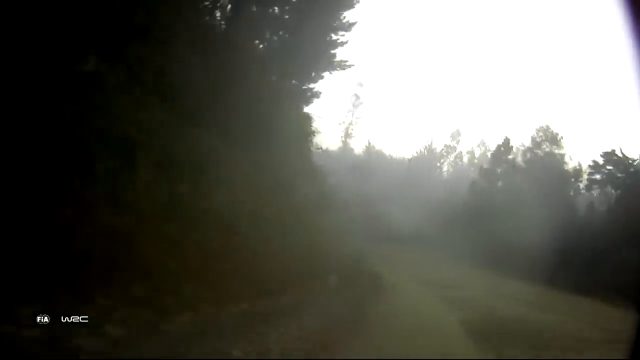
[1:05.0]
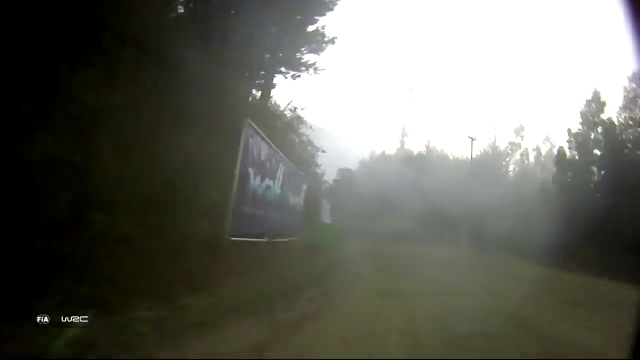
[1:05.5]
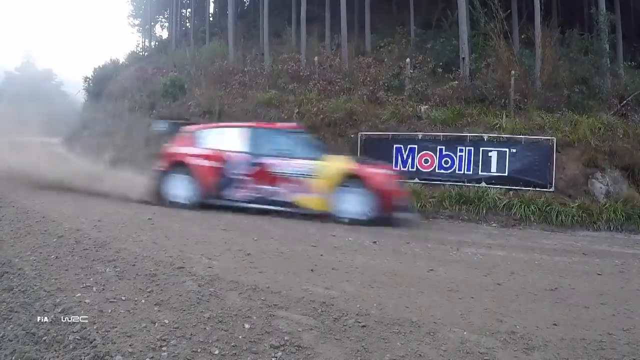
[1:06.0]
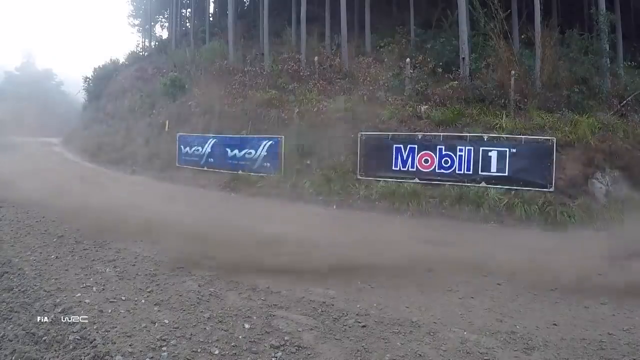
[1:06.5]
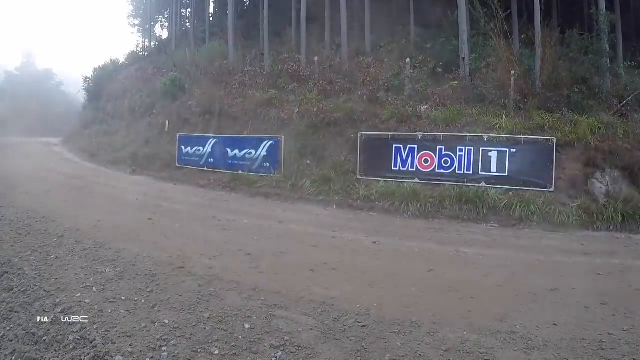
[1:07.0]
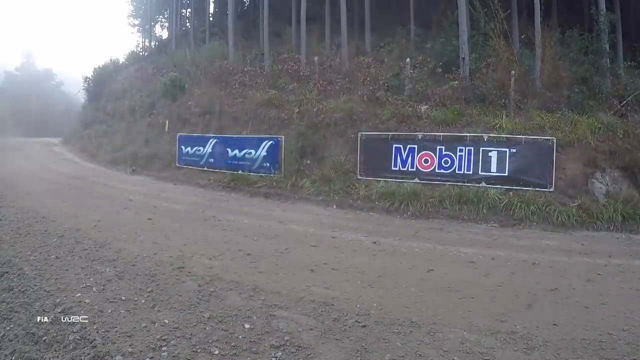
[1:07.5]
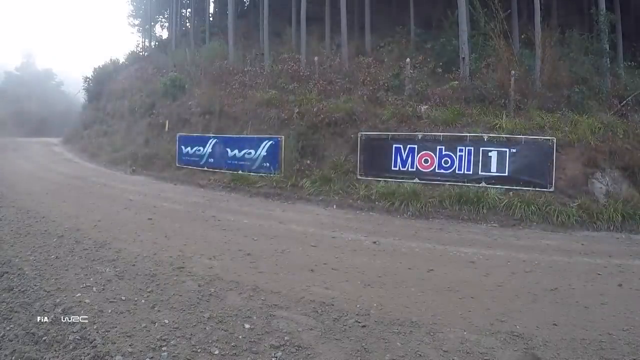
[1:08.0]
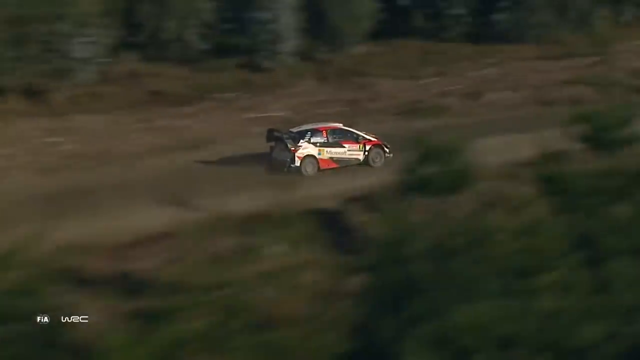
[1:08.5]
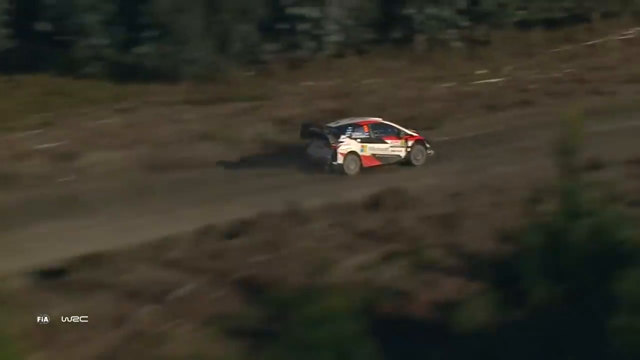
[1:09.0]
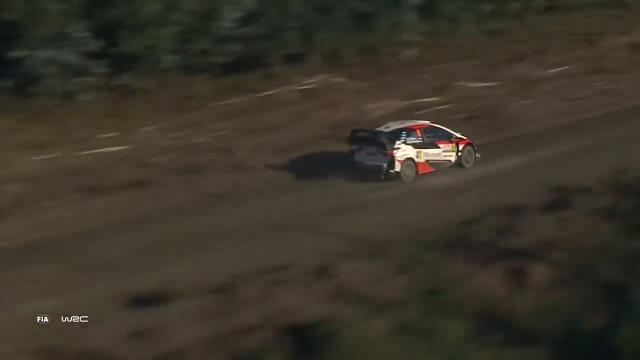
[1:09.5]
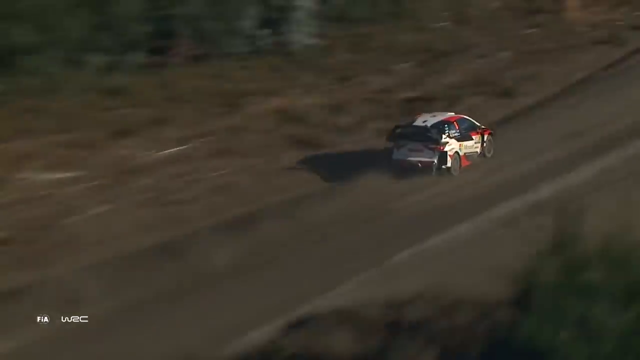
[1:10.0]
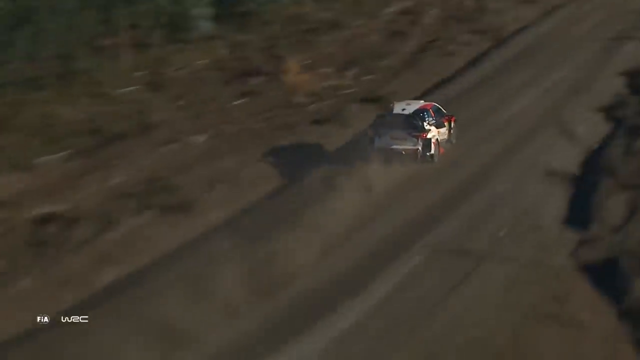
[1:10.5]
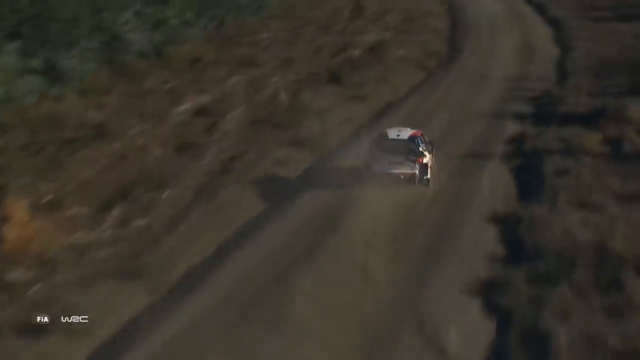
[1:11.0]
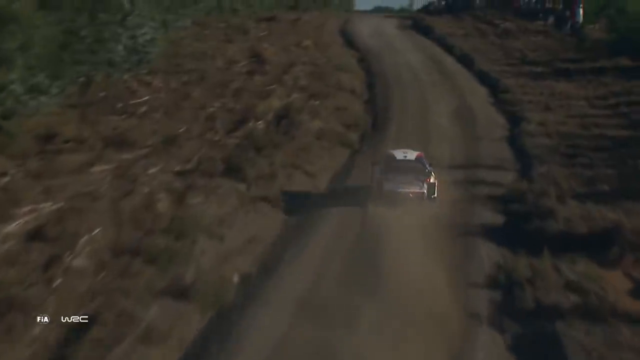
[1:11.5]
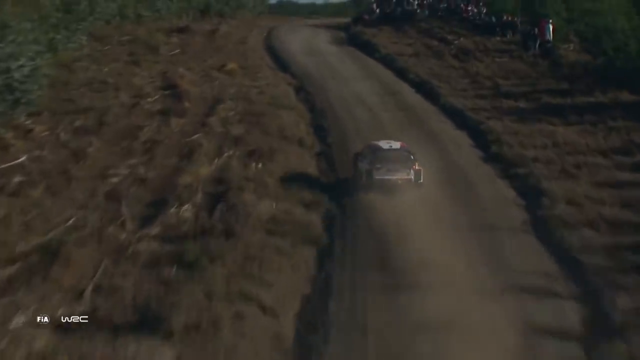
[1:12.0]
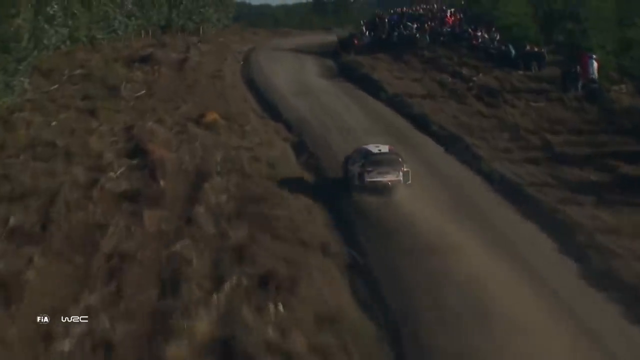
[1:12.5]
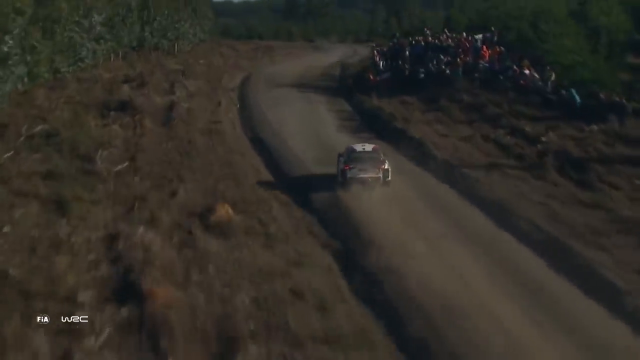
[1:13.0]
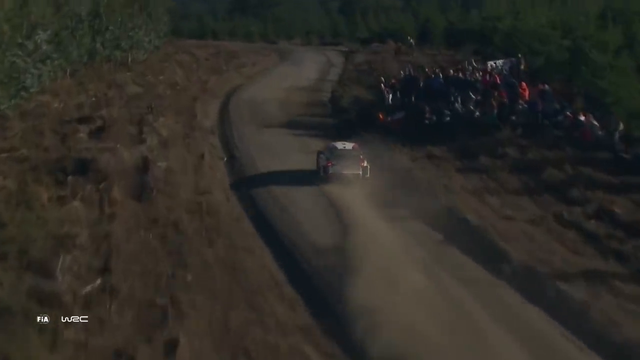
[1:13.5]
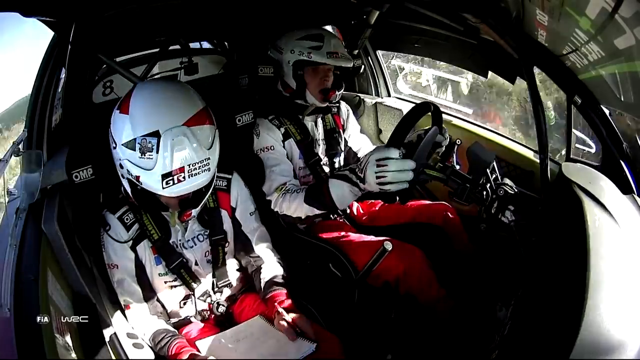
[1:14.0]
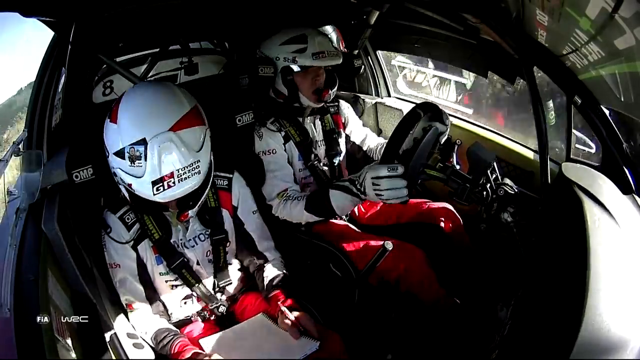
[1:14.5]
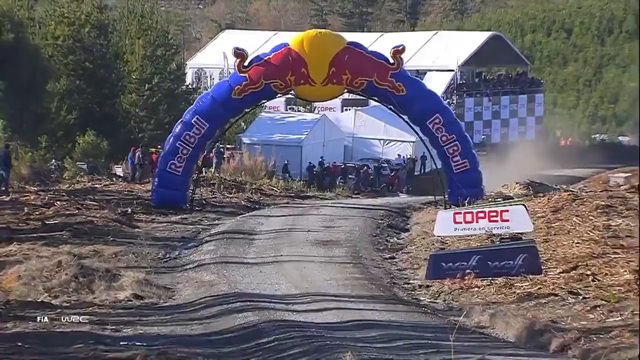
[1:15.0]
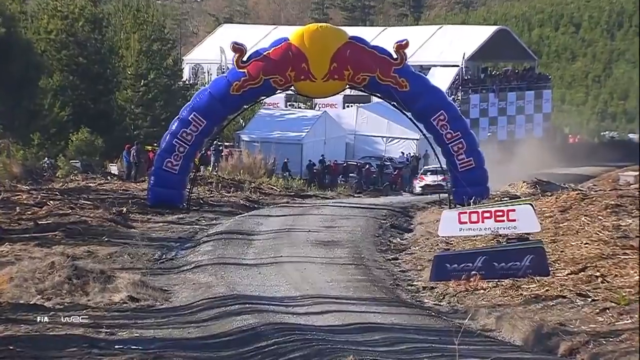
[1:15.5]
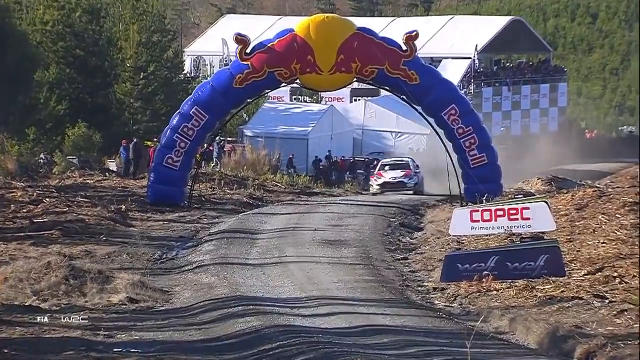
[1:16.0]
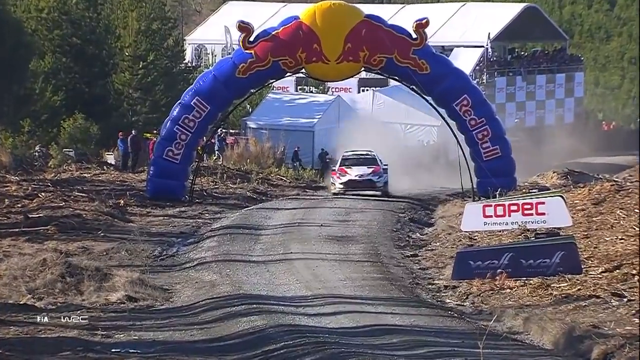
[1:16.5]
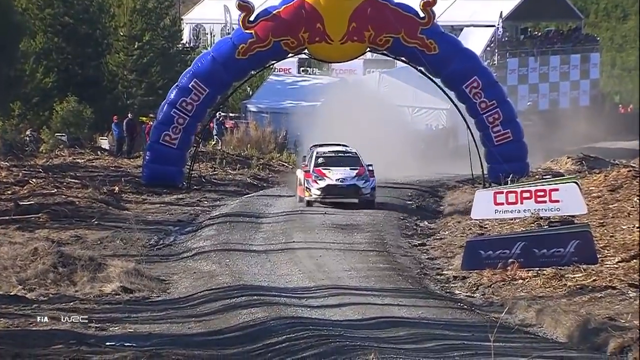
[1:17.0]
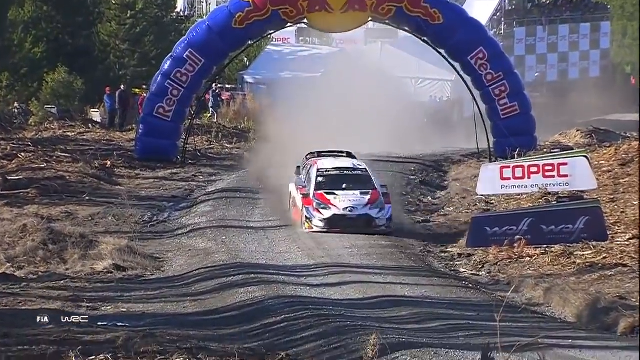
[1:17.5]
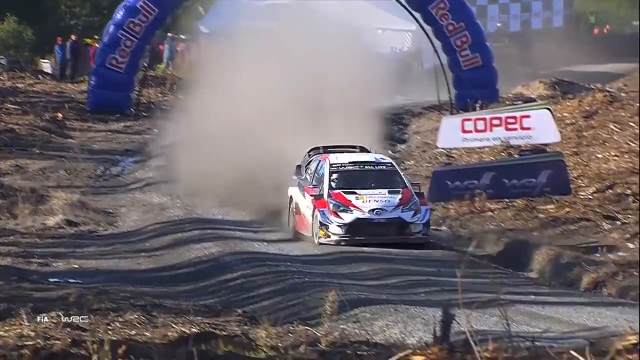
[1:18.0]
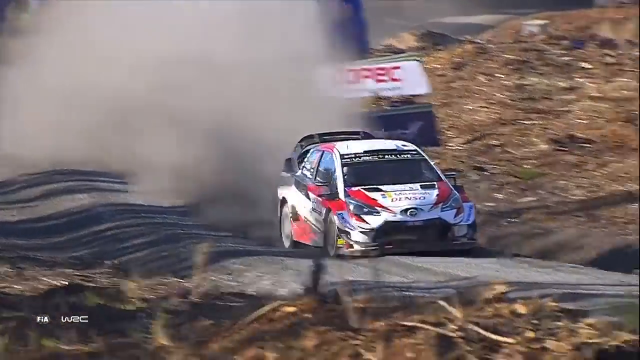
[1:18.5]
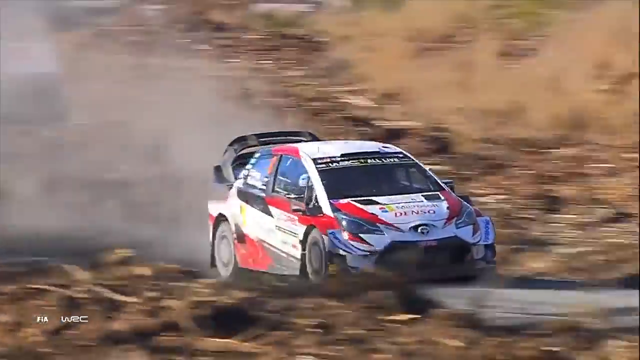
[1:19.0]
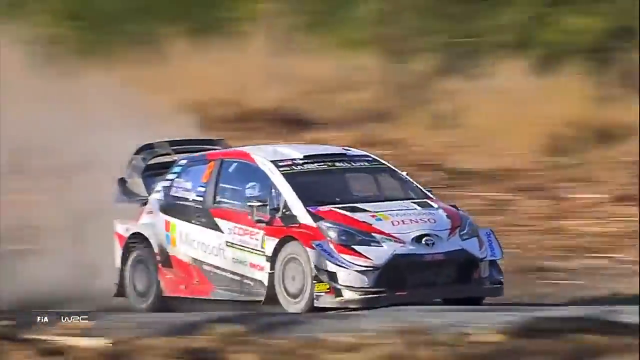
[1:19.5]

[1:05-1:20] At the 2019 COPEC rally in Chile, a fast-moving race car goes up hills, around curves and through a Red Bull inflatable start and finish line. Signs on the side advertise companies. The car is white, with red and black on it as well. The video cuts inside, showing the driver and his passenger sitting right beside him, both with microphones on their helmets. The passenger has a notebook and a writing utensil, apparently for keeping notes on the race. Dust and dirt fly up behind the vehicle as it drives fast.